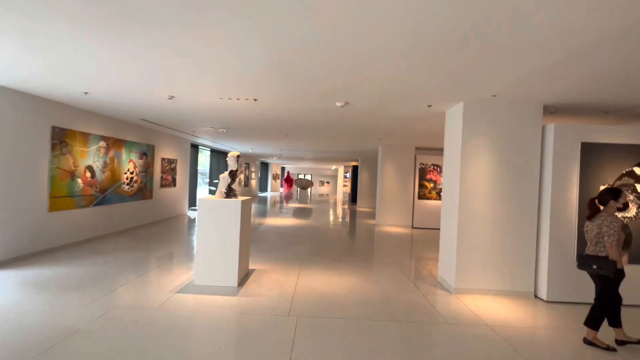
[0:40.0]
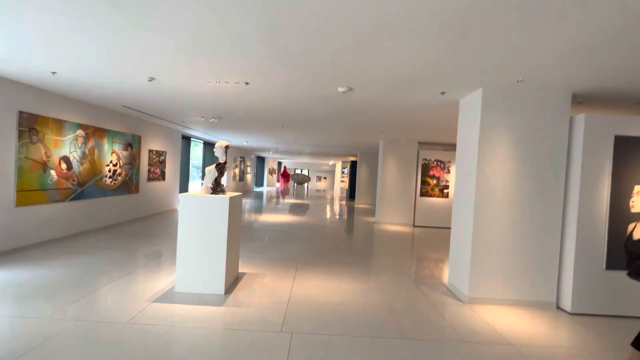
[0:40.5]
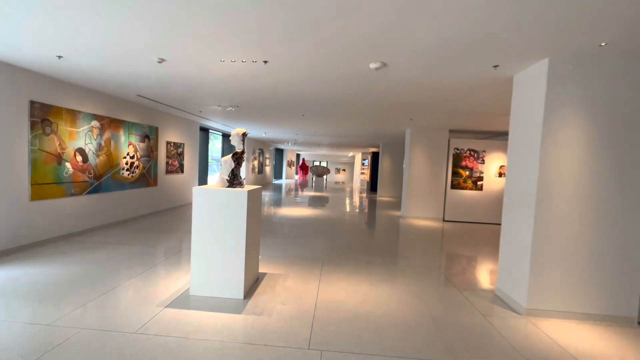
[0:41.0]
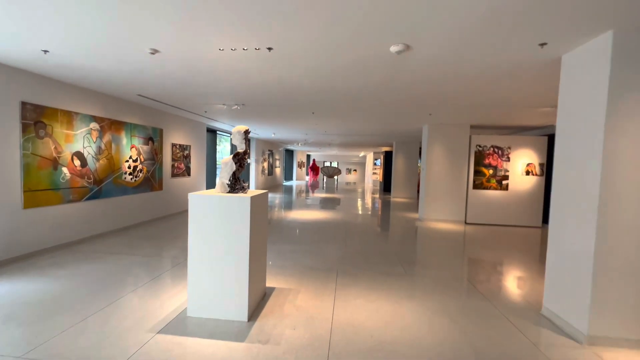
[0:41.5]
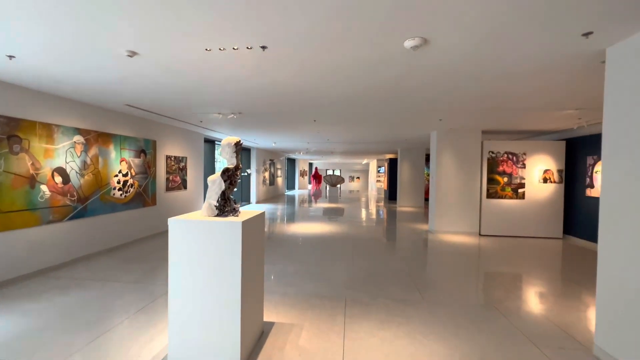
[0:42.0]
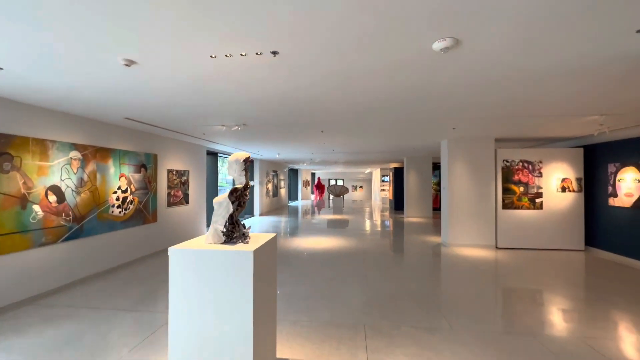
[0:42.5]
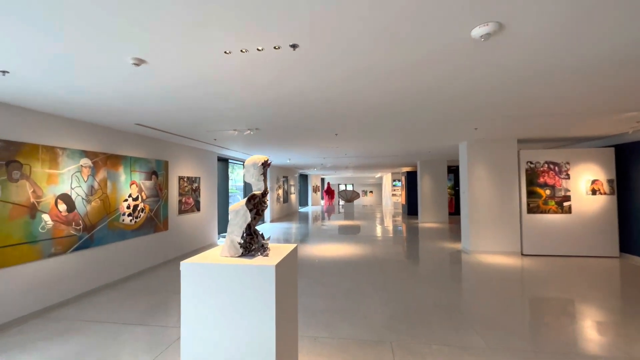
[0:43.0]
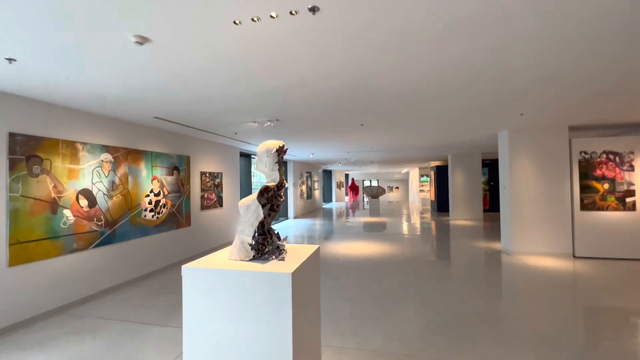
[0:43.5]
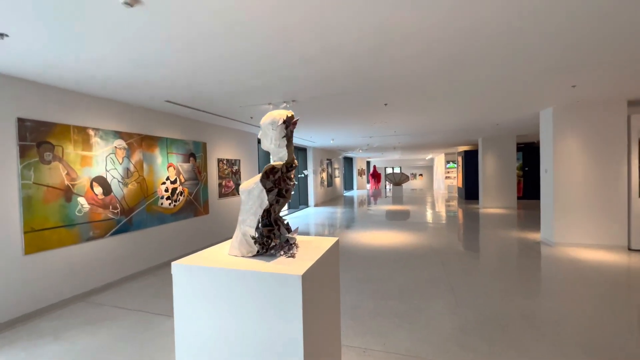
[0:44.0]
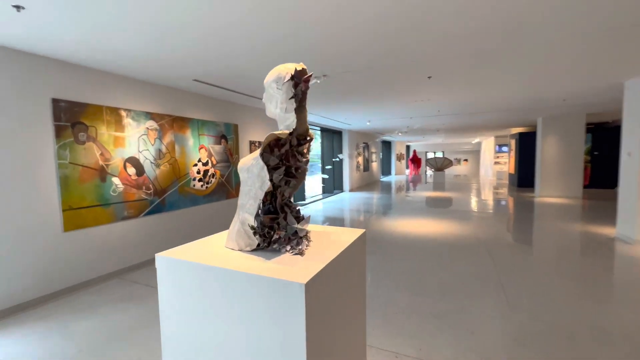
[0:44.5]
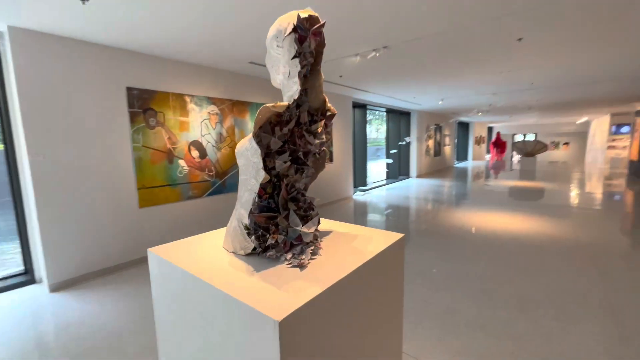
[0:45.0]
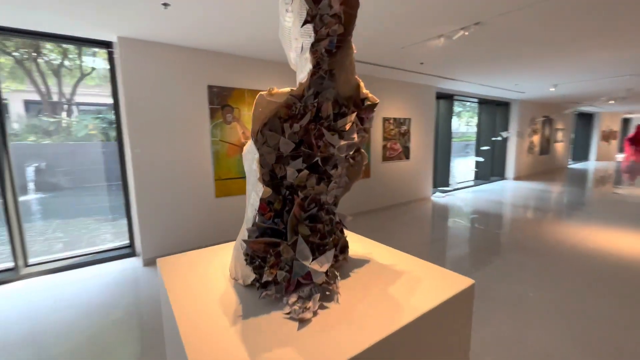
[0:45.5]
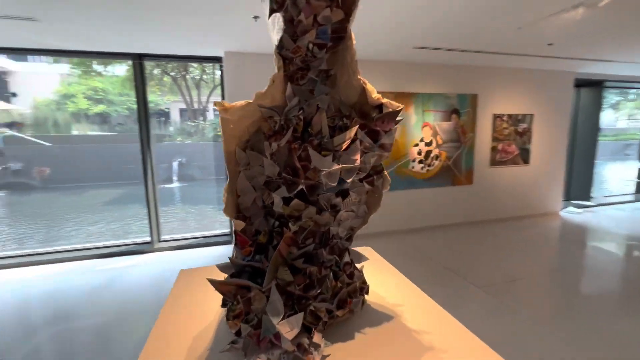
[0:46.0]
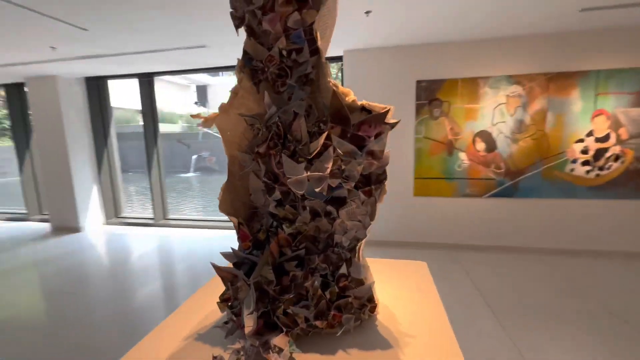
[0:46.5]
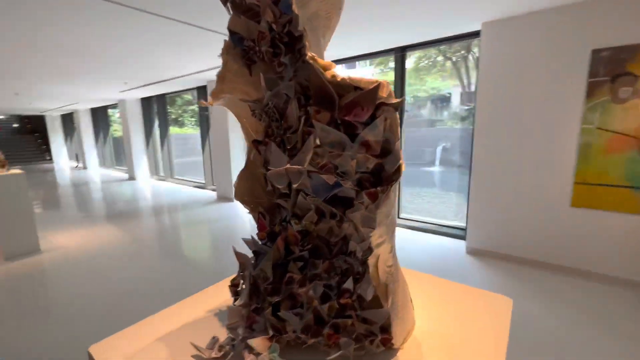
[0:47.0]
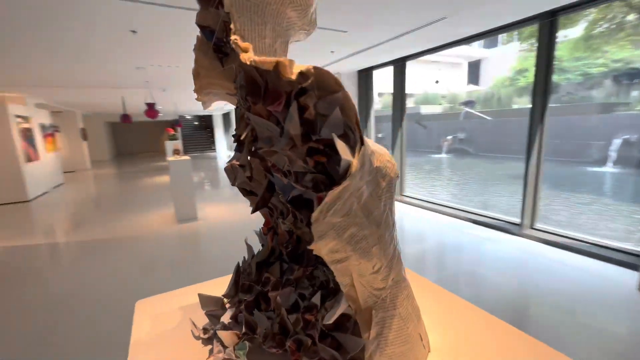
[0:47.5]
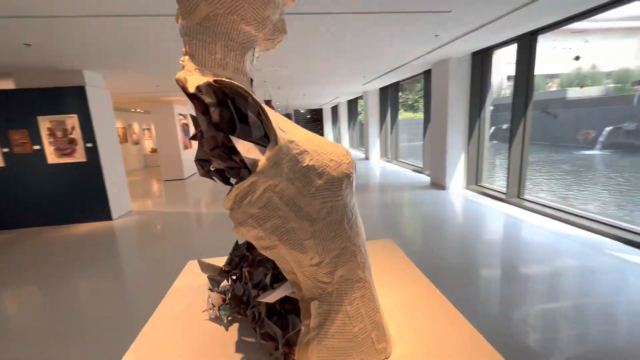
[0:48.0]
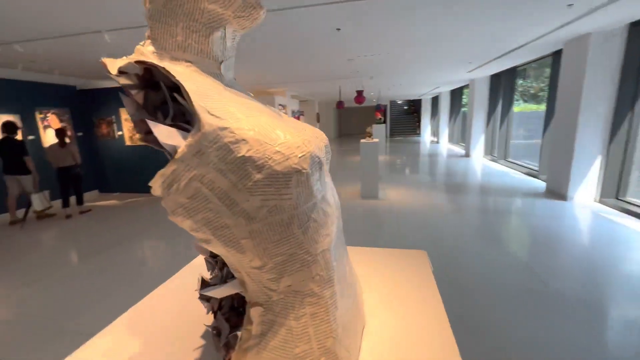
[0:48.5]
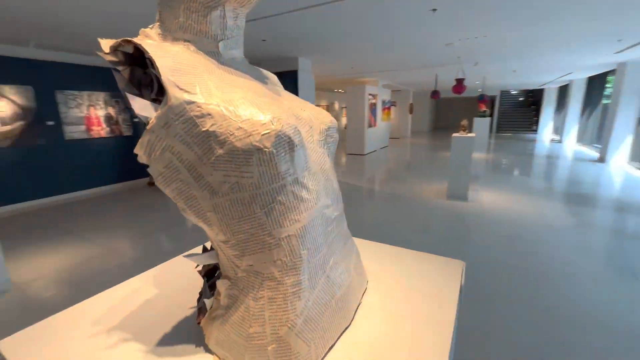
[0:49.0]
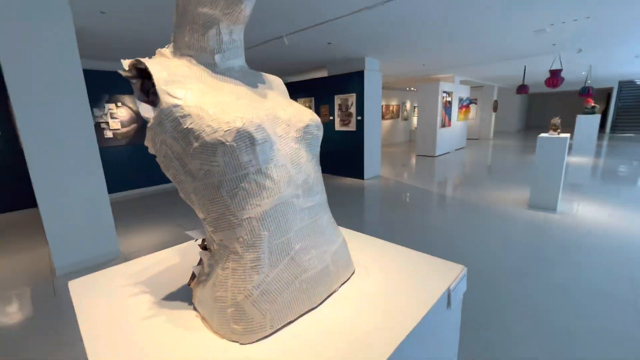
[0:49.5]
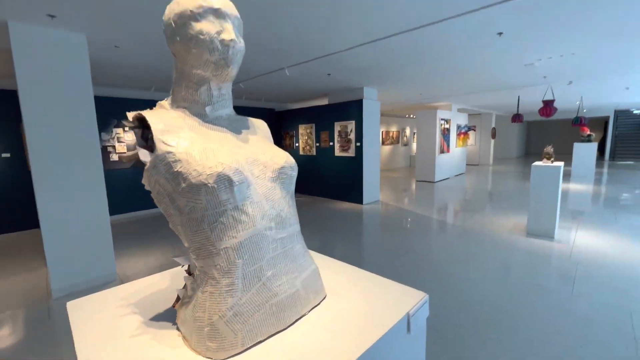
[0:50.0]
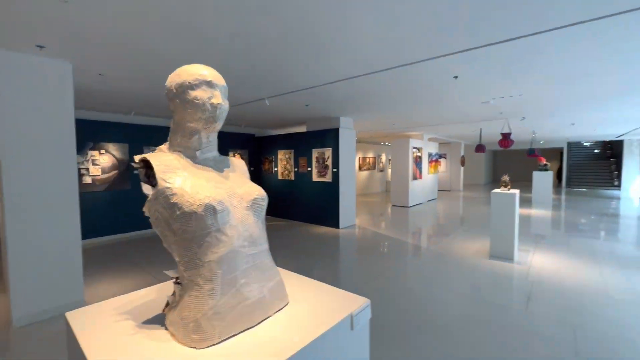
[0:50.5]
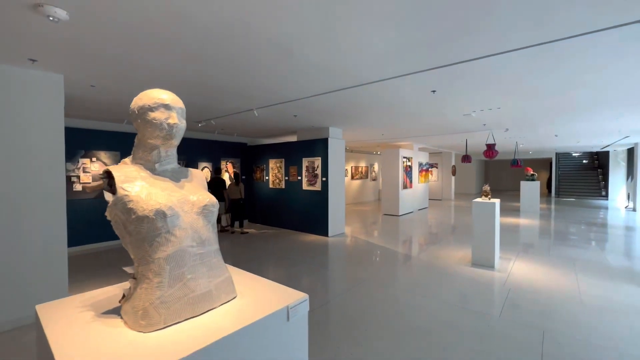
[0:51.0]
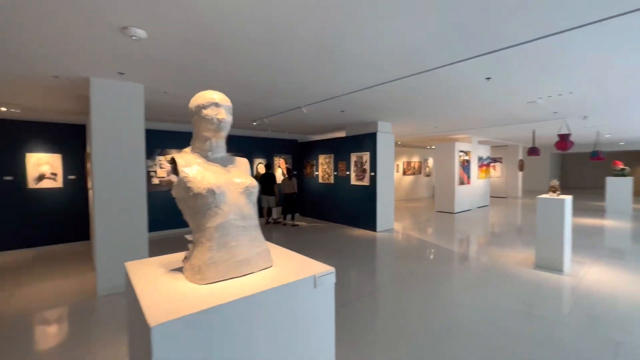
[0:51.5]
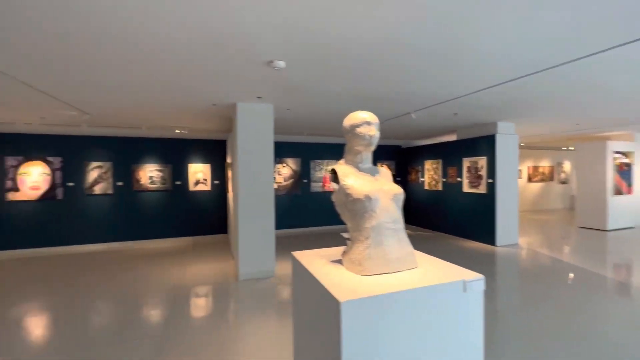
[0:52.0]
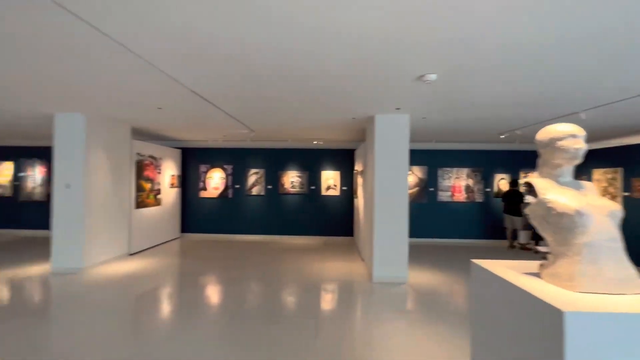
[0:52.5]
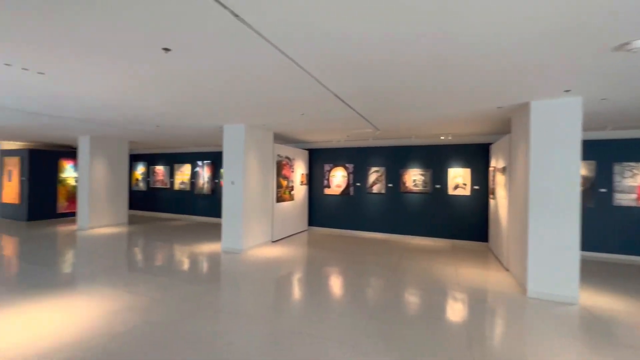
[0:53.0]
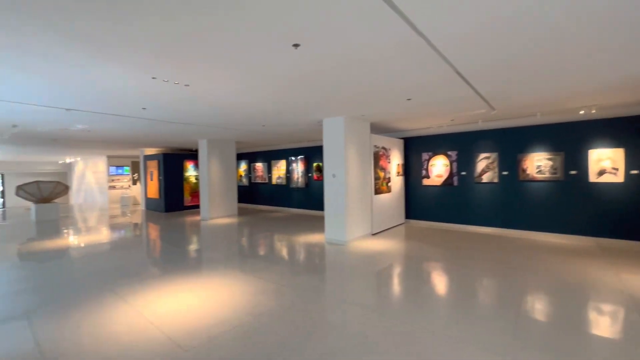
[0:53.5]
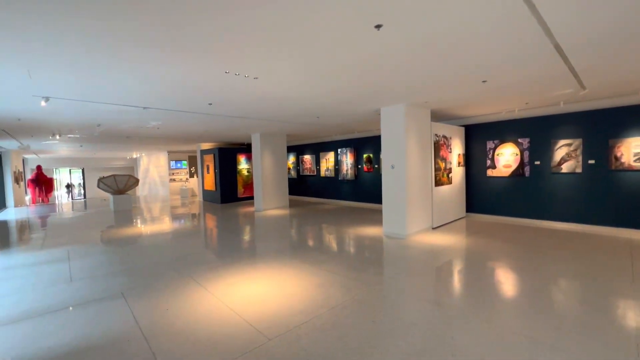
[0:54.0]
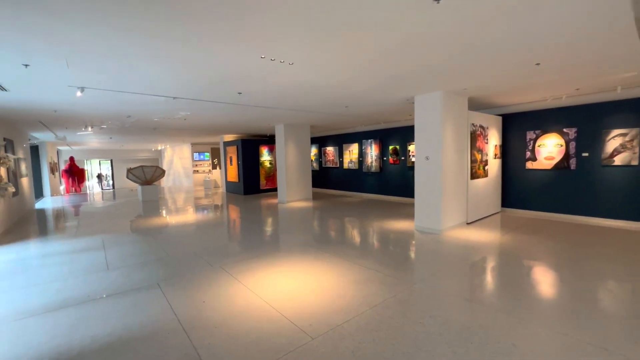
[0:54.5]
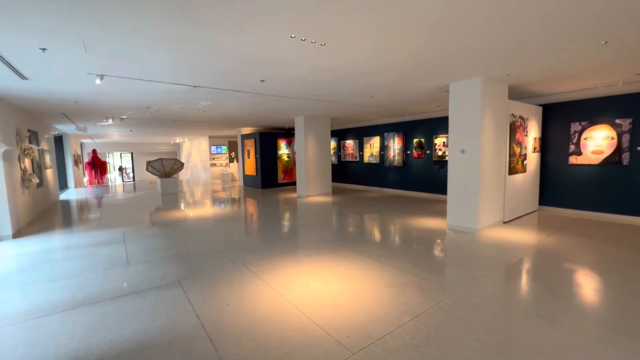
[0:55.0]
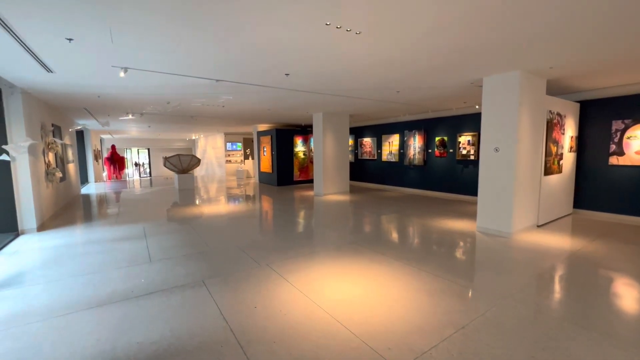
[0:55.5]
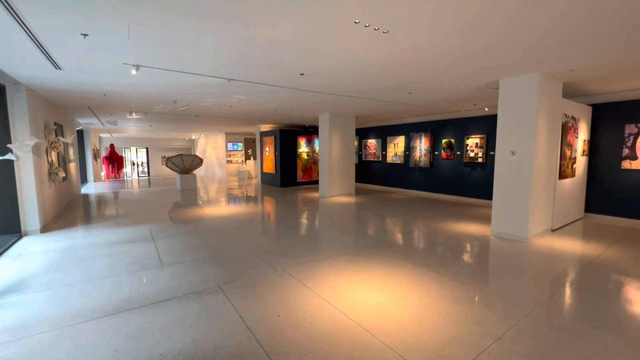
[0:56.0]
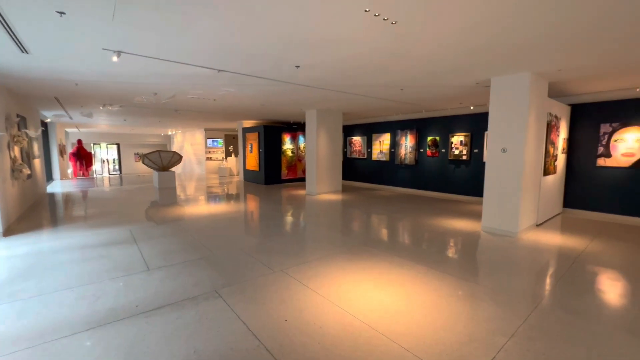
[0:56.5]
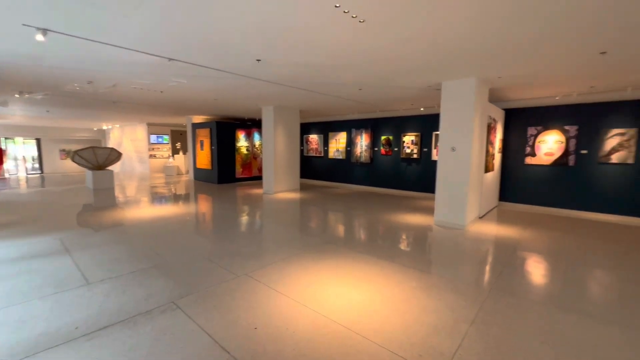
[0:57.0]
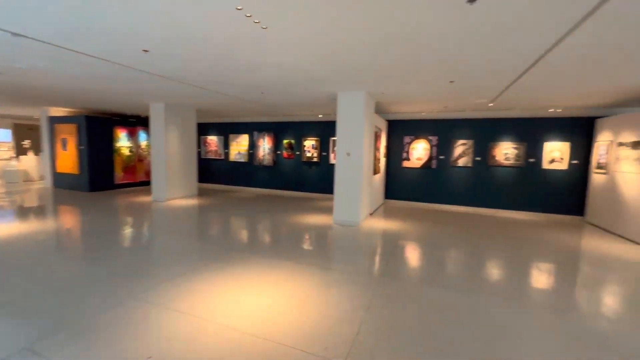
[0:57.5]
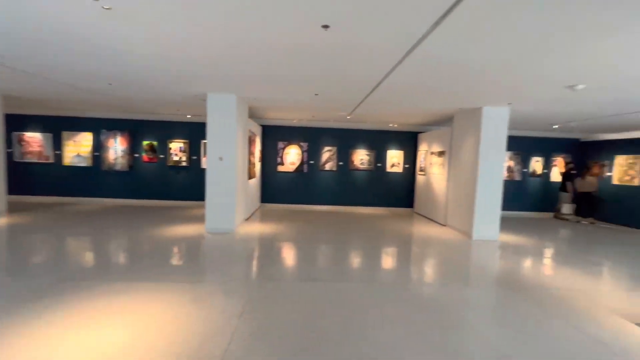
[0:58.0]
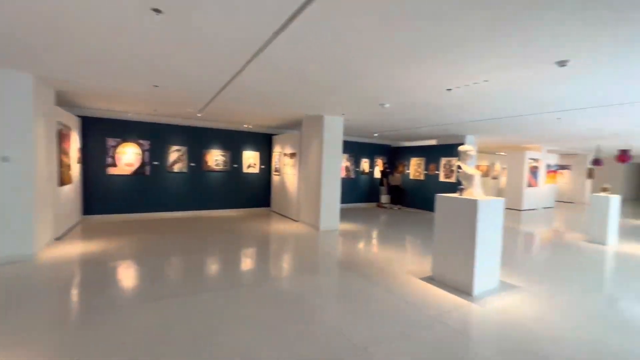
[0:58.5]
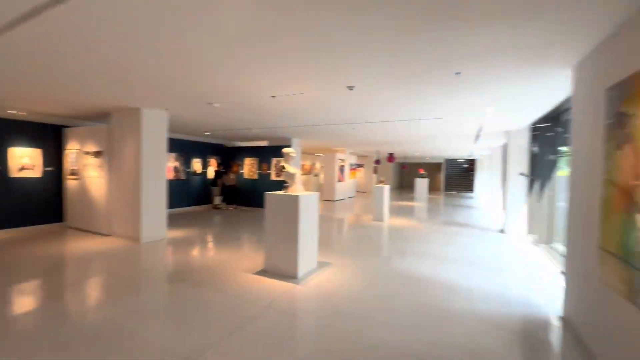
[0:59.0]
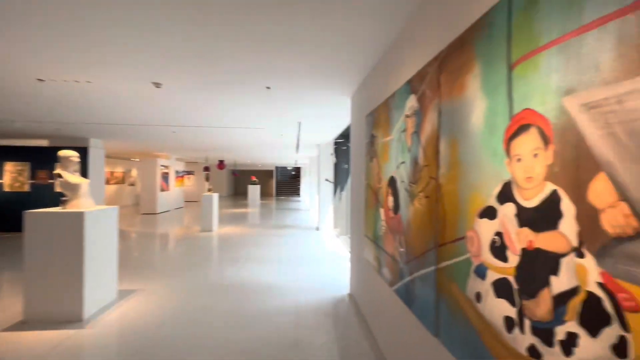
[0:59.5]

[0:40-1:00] A museum displays art on white walls. There are various types of art, mostly modern and contemporary, and a large picture is opposite small rooms that have pictures displayed in them. There are columns with larger artwork on them, such as a bust. One side of the museum has glass doors; inside the glass doors is what looks like a pond, with water flowing into it. Only one woman walks around, looking at different things very carefully and slowly as she walks the floor of the gallery. The walls, floors, sides and ceiling are all white, making the room look very clean, and the artwork is very visible against the white walls.